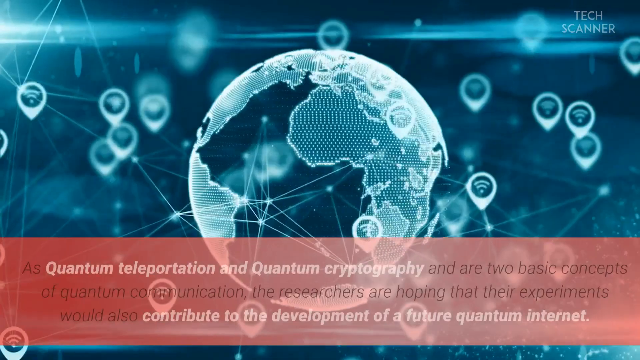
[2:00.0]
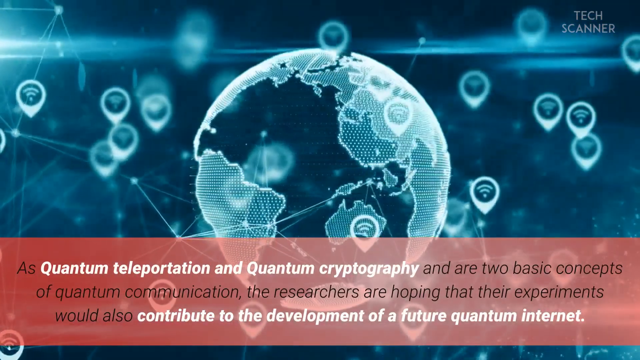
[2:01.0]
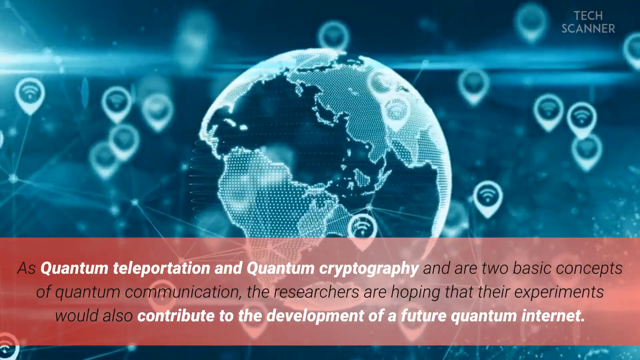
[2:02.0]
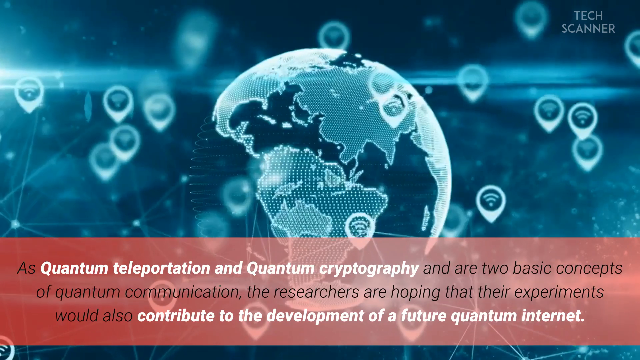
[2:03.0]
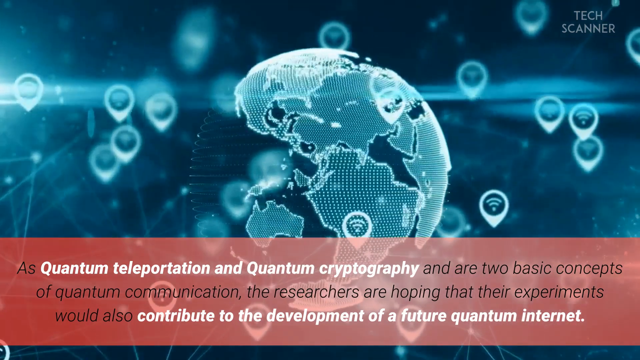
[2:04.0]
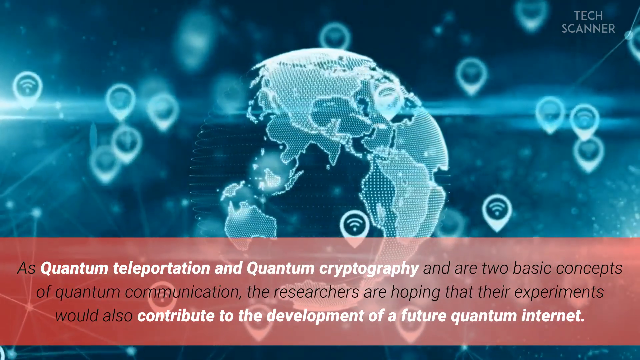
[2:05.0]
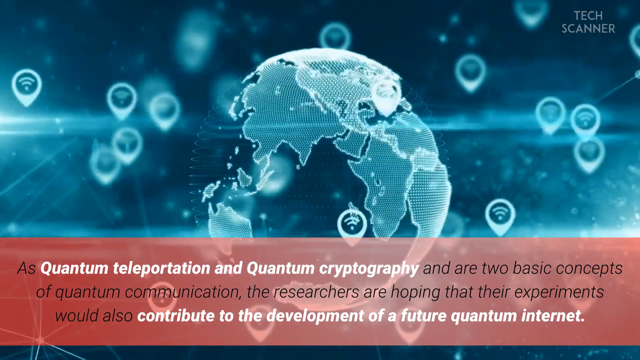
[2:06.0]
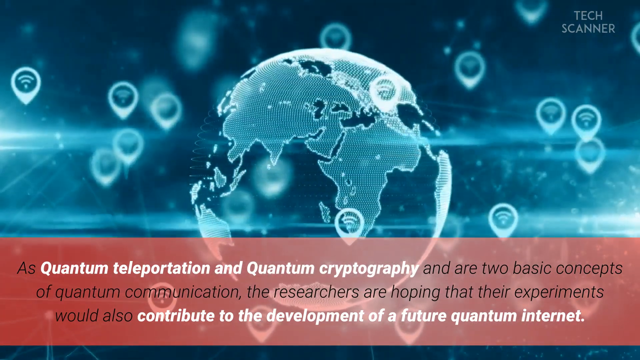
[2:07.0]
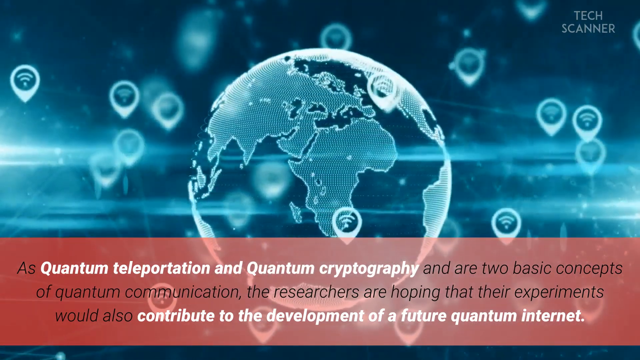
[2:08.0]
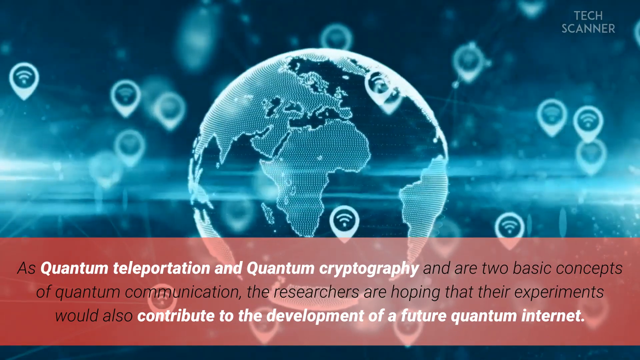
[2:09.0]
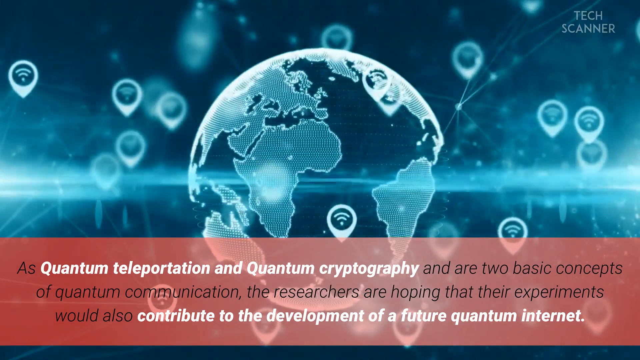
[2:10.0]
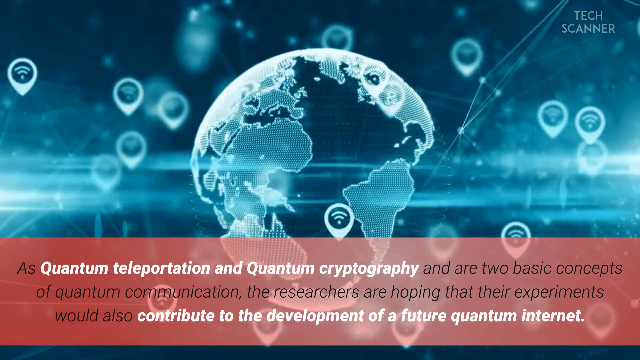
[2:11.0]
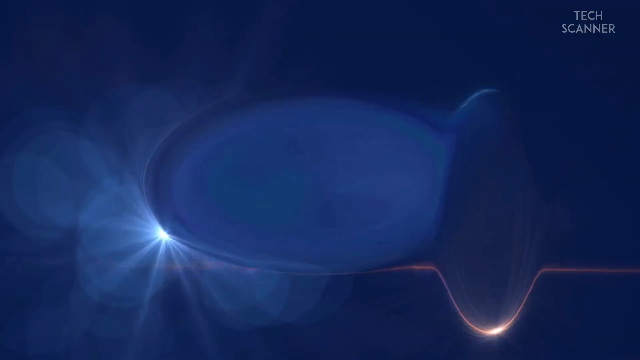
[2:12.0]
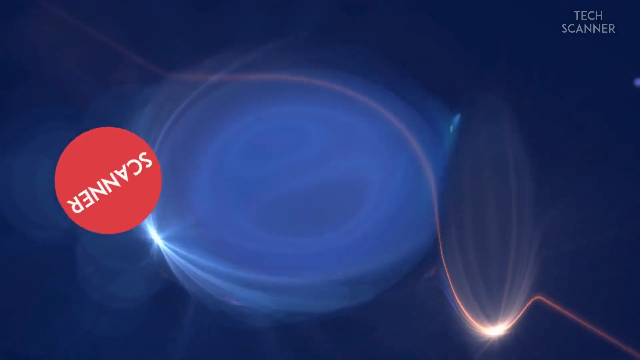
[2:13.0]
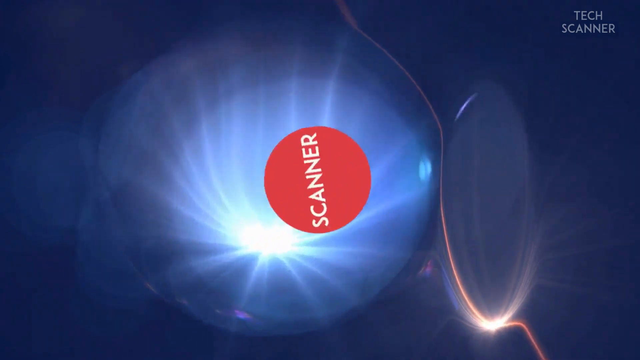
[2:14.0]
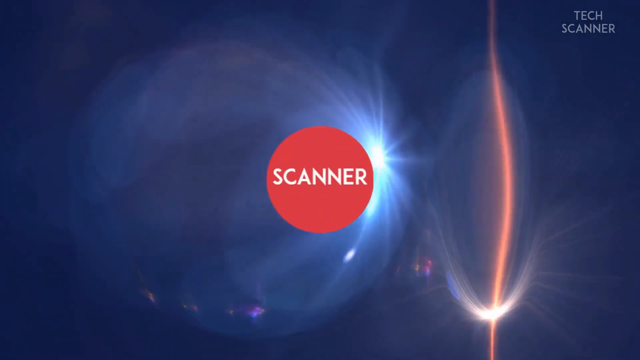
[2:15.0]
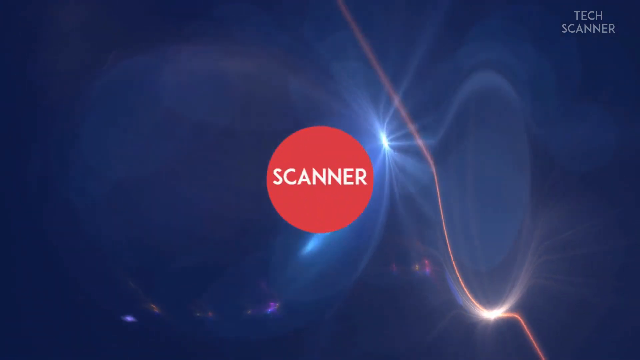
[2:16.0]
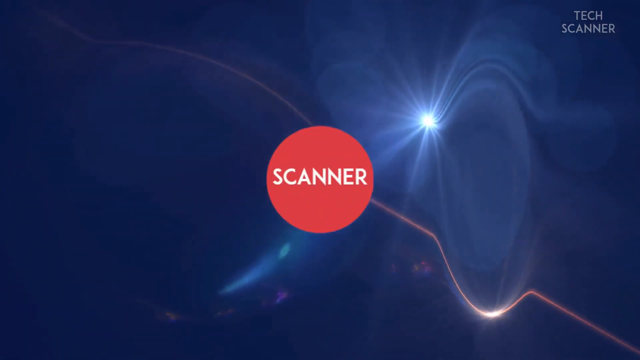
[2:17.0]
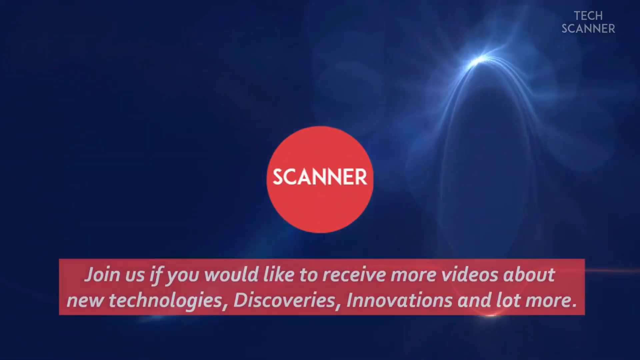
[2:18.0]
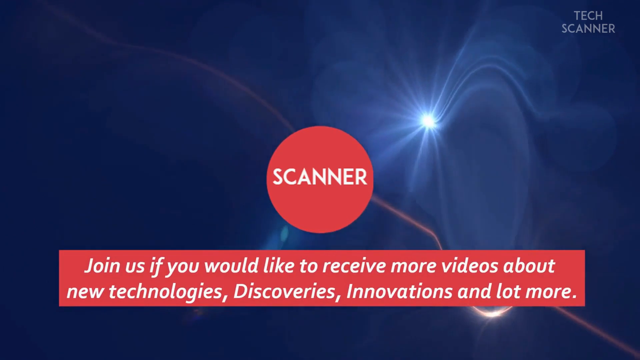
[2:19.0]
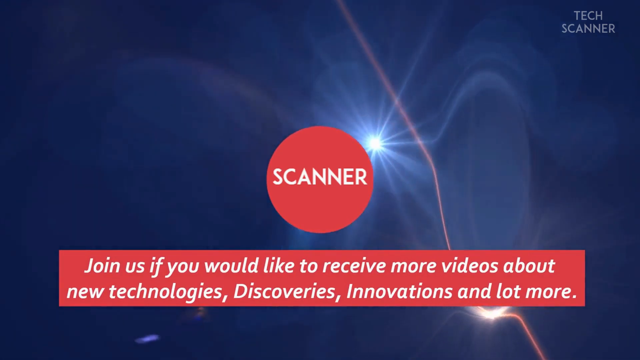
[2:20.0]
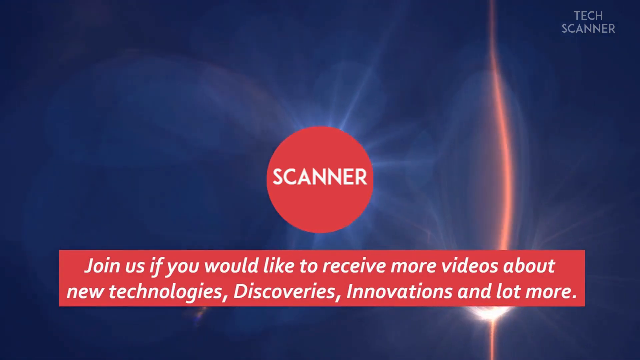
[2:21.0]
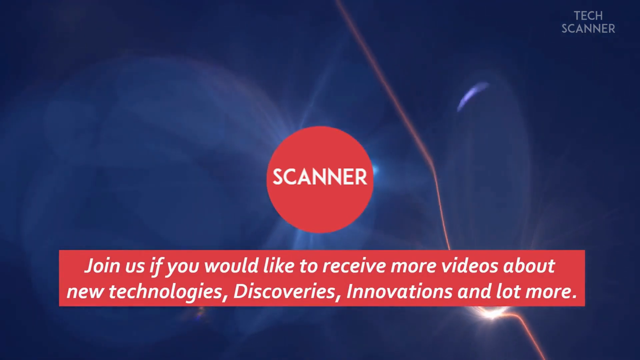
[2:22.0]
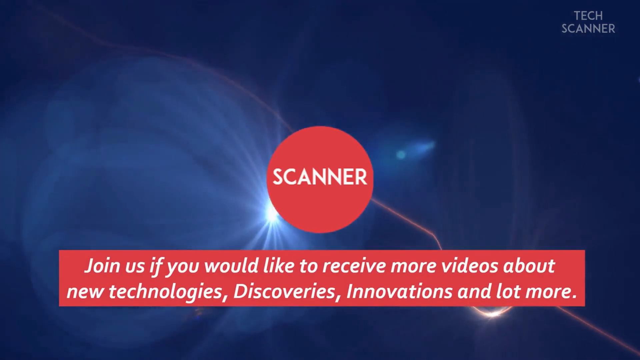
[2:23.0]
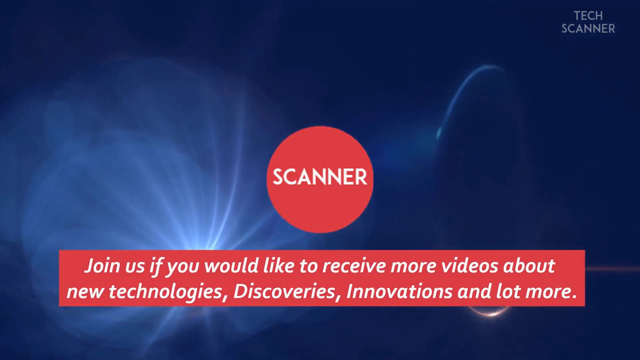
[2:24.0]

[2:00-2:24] The image has an illuminated appearance, and the red box at the bottom carries text naming quantum teleportation and quantum cryptography as two basic concepts of quantum communication, followed by "the researchers are hoping that their experiments would also contribute to the development of a future quantum Internet." The globe slowly rotates. The scene then switches to a bluish, electric-blue background with swirls of electric light moving in it. A logo pops up in the center of the screen: a red circle that says "scanner" in white lettering. Underneath, in white lettering inside a red box, it says "join us if you would like to receive more videos about new technologies, discoveries, innovations, and a lot more." In the upper left-hand corner is "tech scanner."